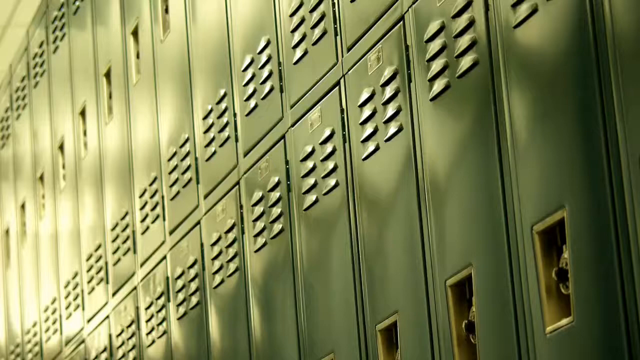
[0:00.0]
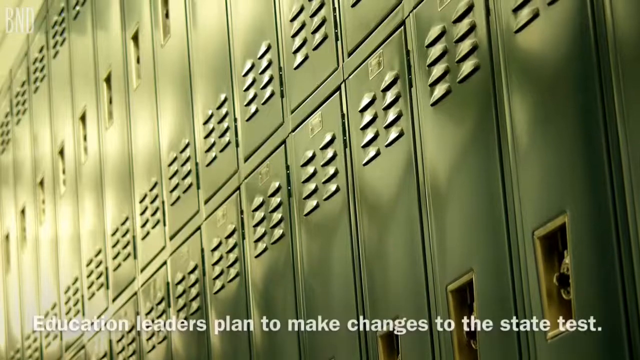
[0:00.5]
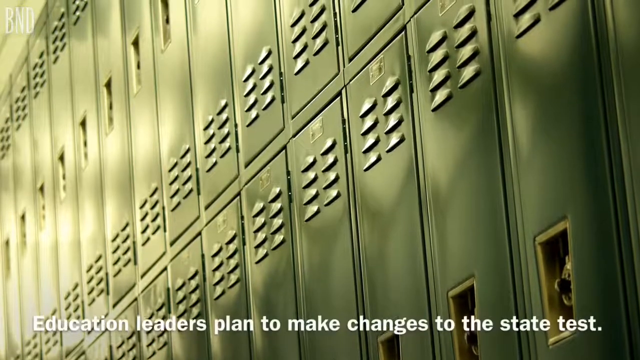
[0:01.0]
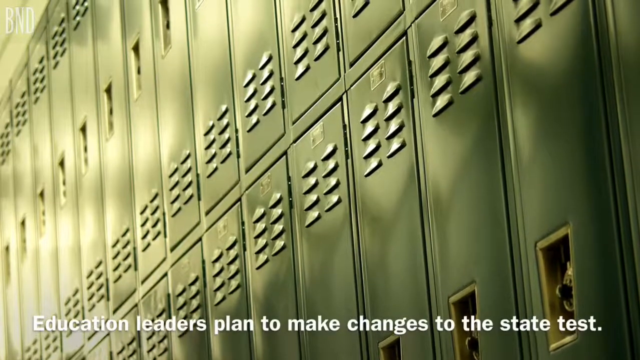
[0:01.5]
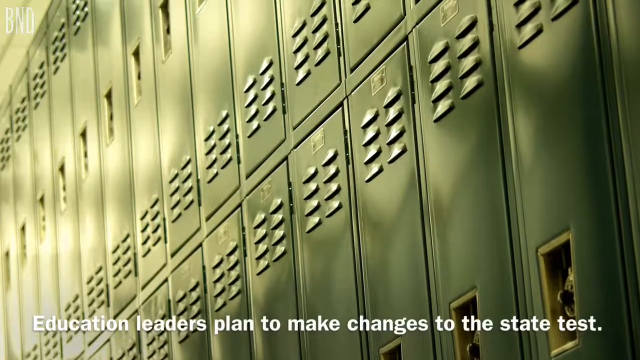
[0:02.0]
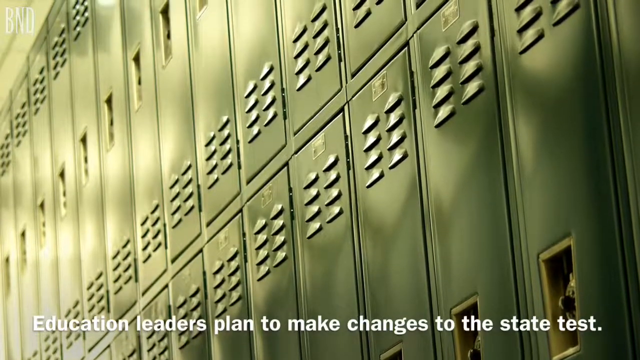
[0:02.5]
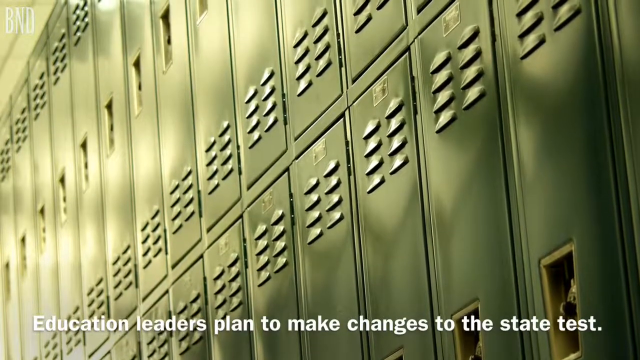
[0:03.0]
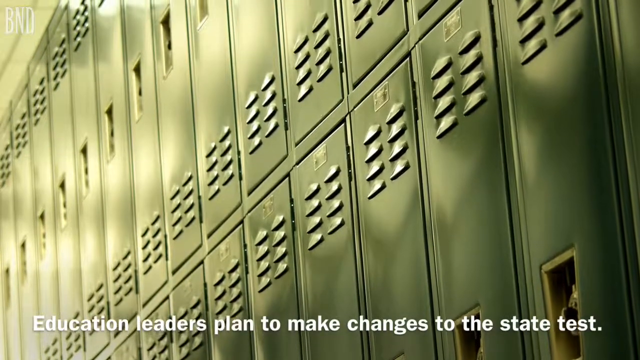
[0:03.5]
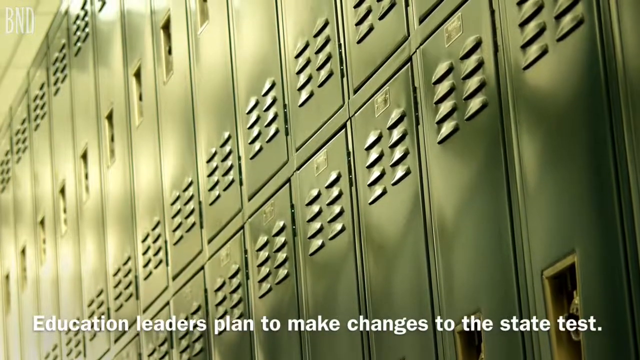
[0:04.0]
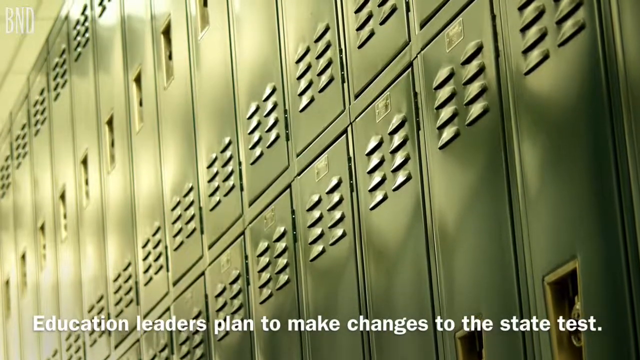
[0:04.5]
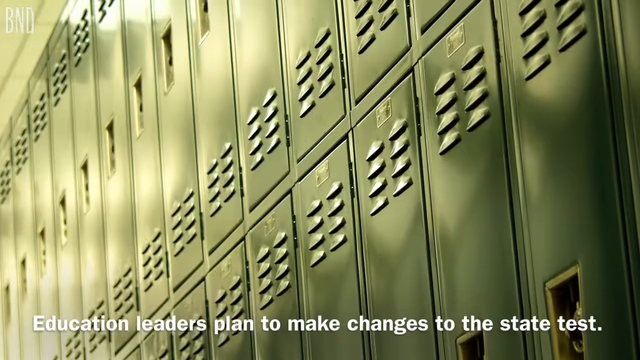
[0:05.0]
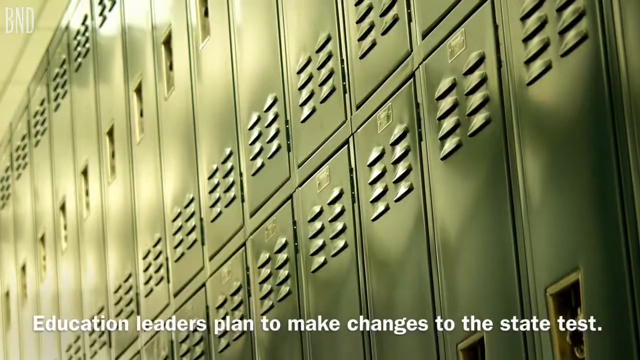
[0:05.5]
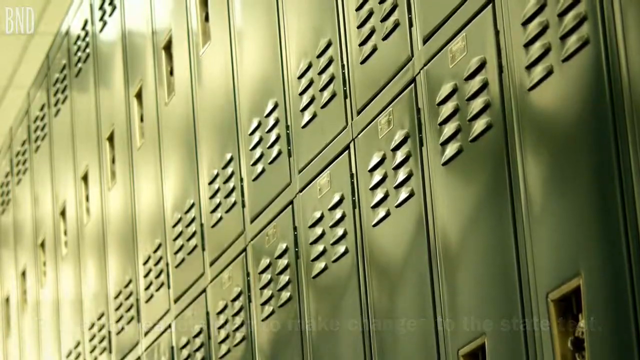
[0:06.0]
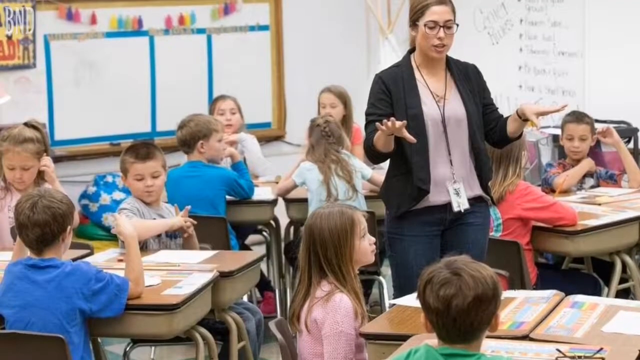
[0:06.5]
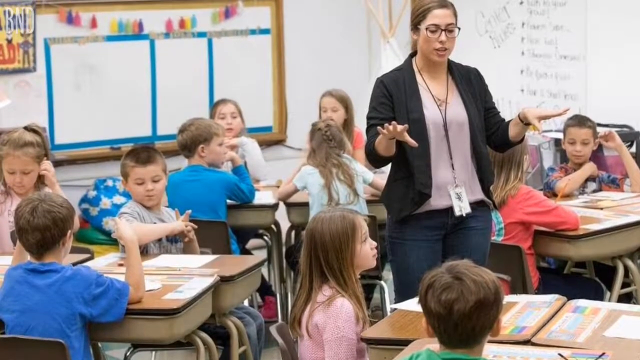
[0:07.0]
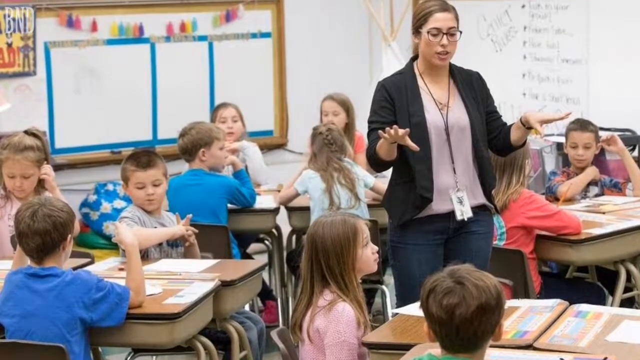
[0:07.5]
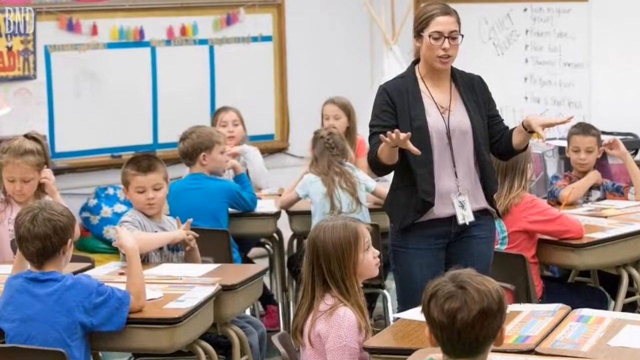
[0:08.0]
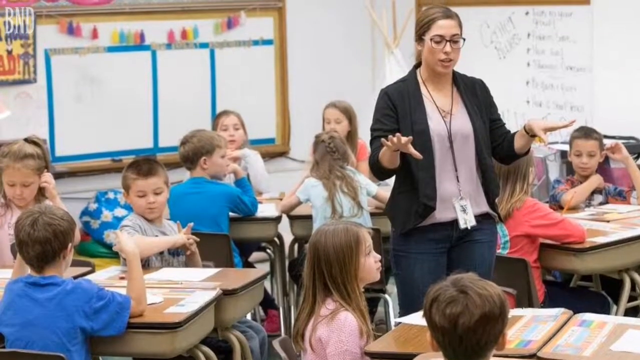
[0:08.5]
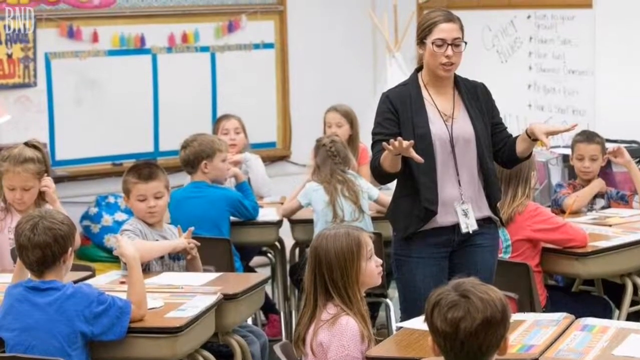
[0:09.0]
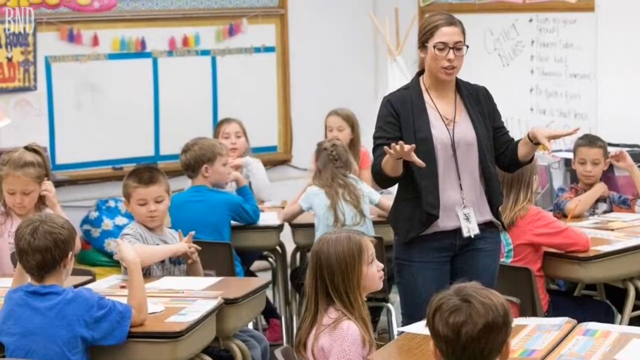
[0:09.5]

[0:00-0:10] Green locker rooms with hints of brown appear, with white text reading "education leaders plan to make changes to the status." The camera pans across more of the lockers, and "BND" with a copyright mark is visible in the top left corner. The scene changes to a picture of a classroom, where a woman stands in the middle of the room addressing the children, who are seated at tables across from and next to each other. Chairs and tables fill the room, and boards and colorful items are visible in the background before the video moves to another scene.